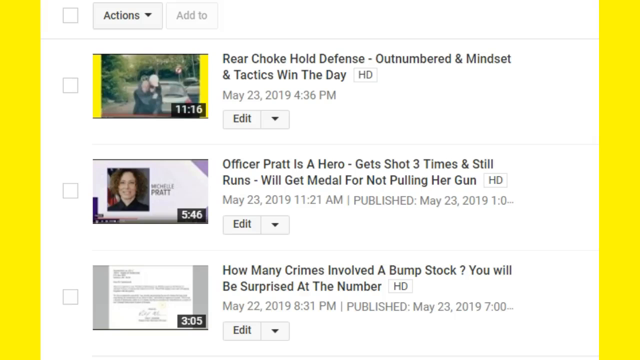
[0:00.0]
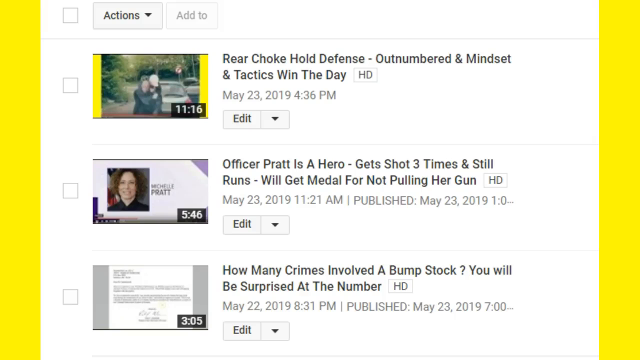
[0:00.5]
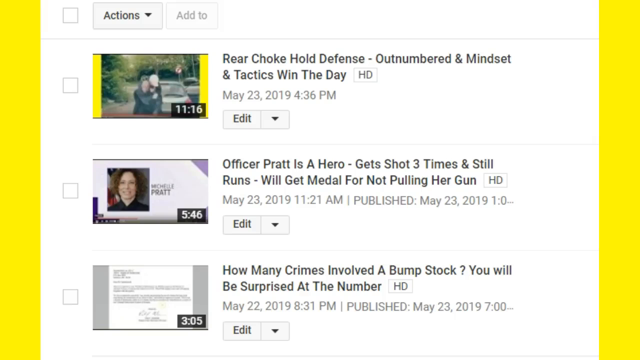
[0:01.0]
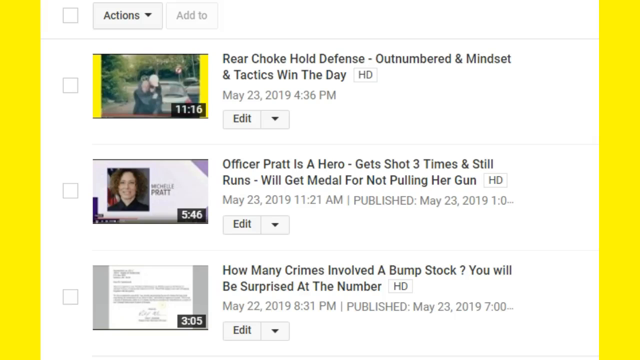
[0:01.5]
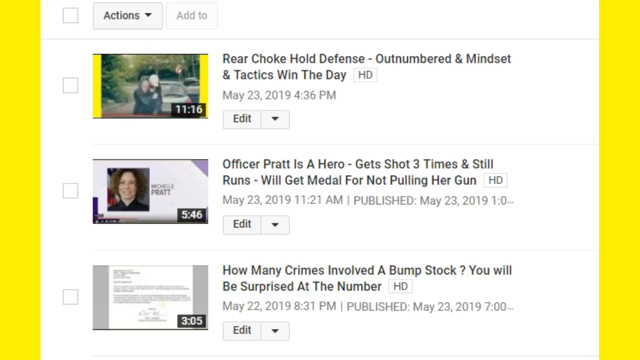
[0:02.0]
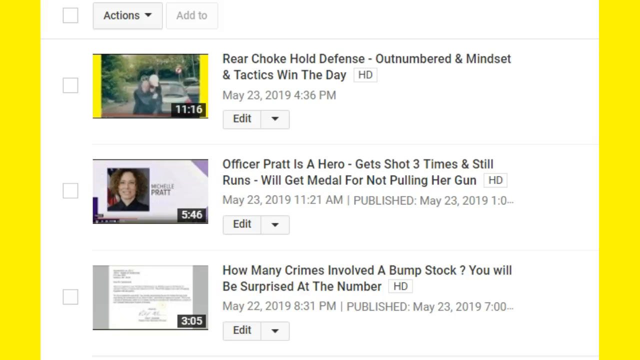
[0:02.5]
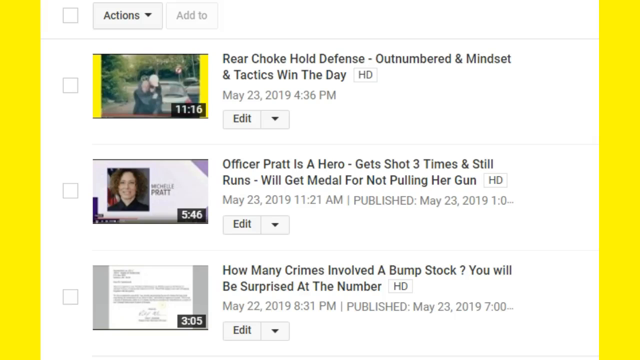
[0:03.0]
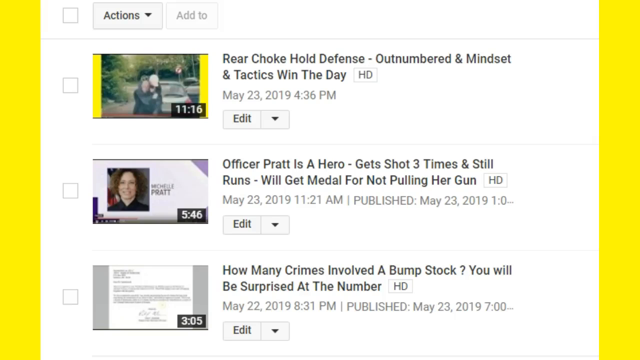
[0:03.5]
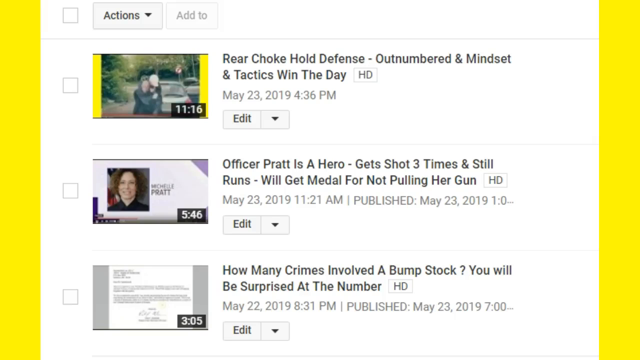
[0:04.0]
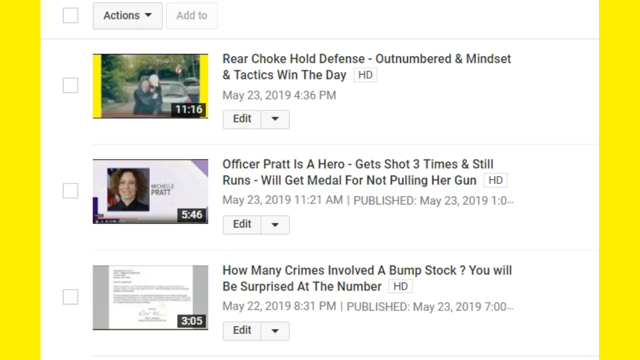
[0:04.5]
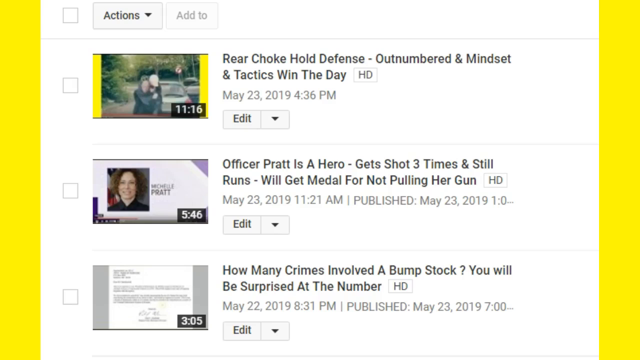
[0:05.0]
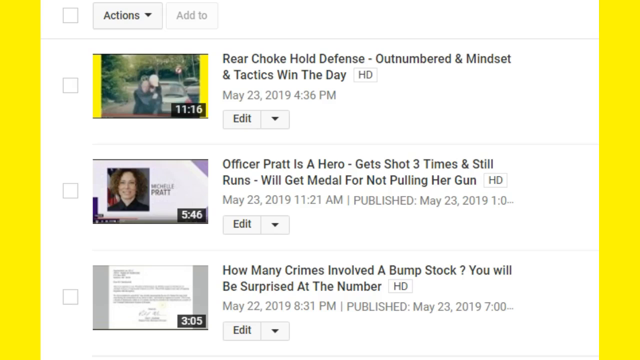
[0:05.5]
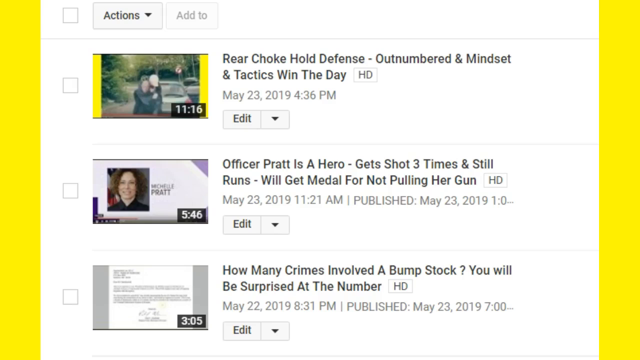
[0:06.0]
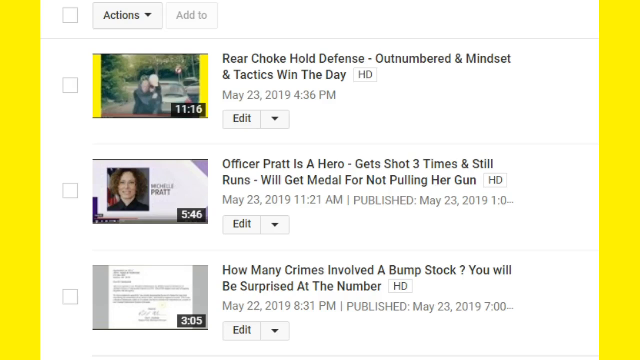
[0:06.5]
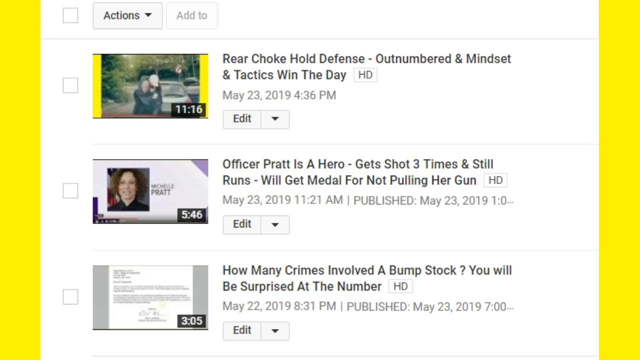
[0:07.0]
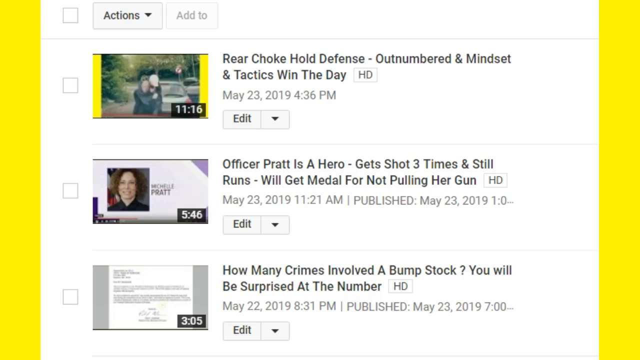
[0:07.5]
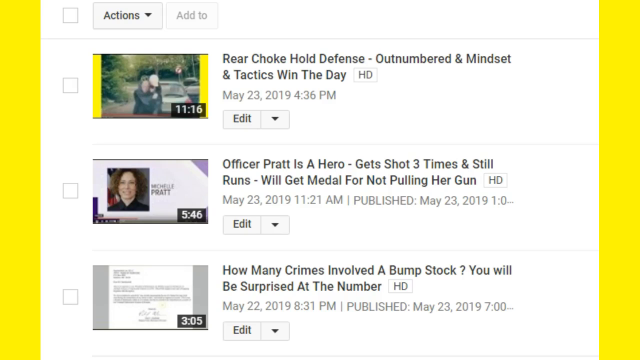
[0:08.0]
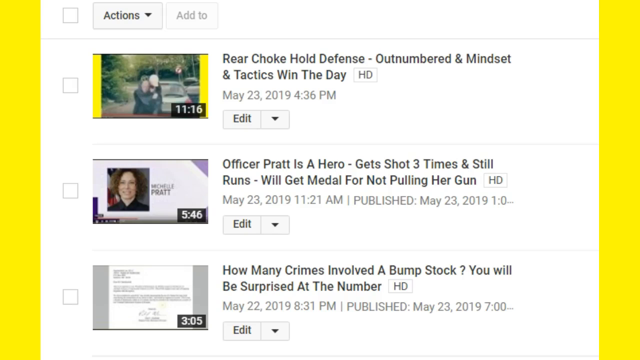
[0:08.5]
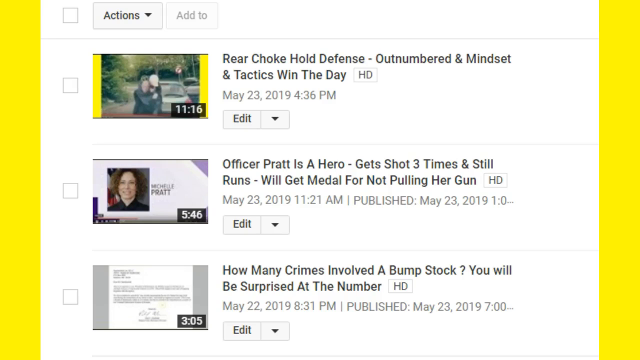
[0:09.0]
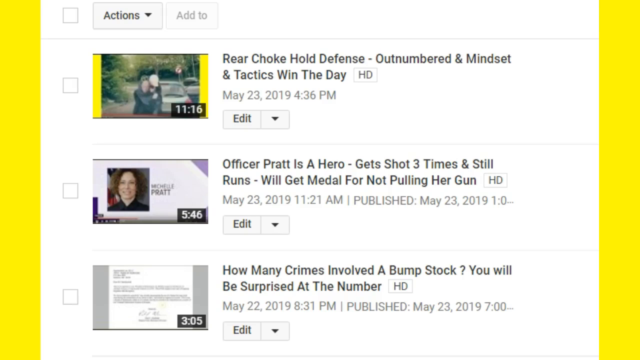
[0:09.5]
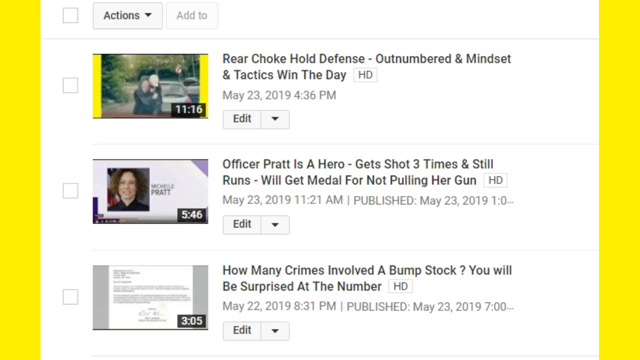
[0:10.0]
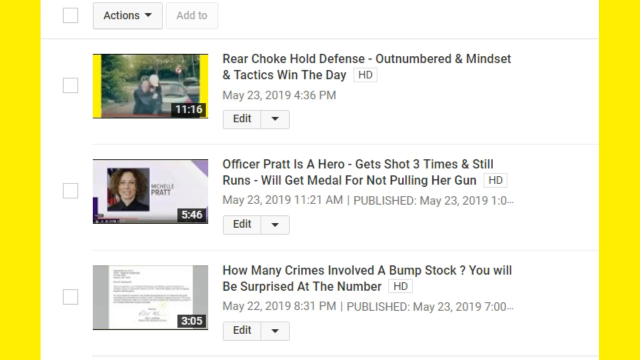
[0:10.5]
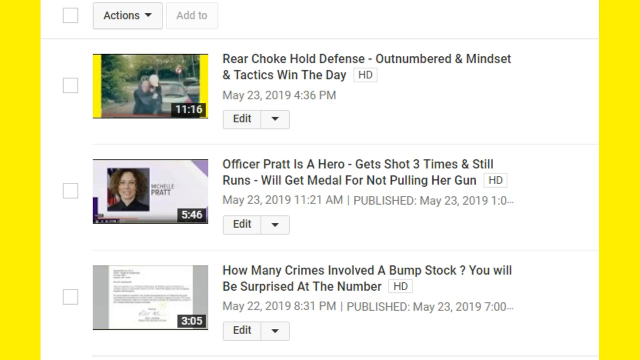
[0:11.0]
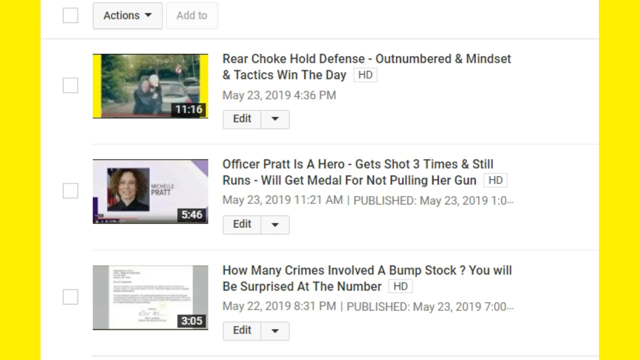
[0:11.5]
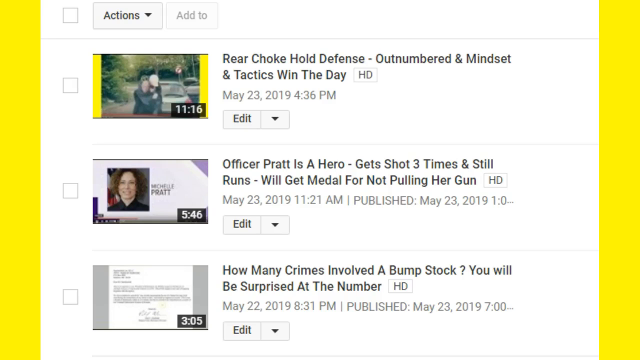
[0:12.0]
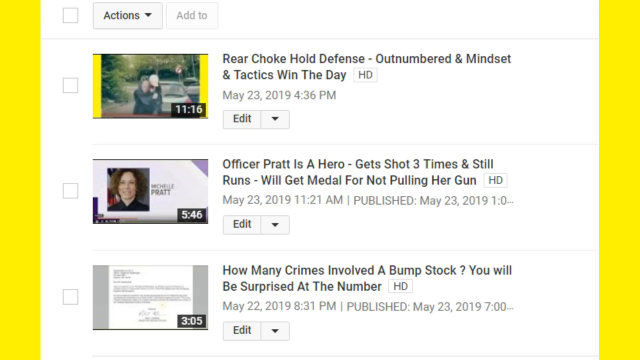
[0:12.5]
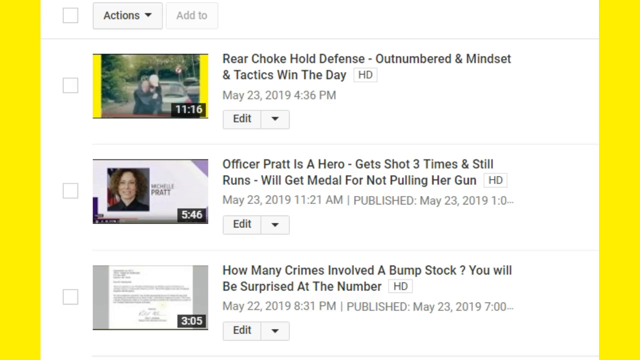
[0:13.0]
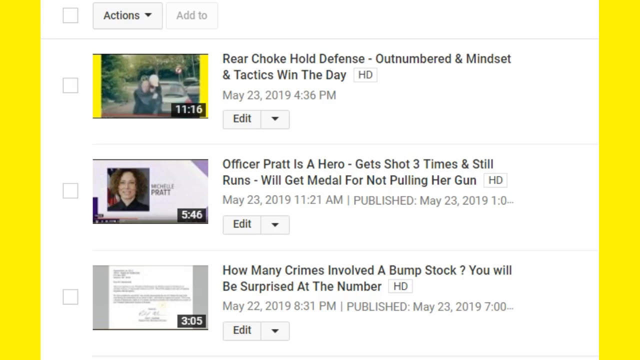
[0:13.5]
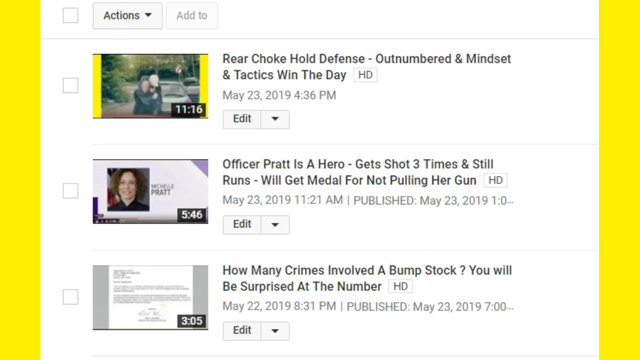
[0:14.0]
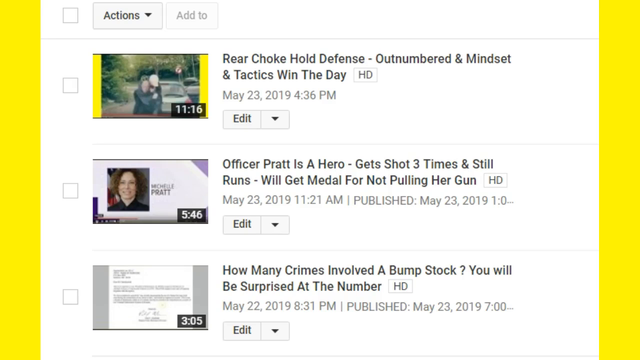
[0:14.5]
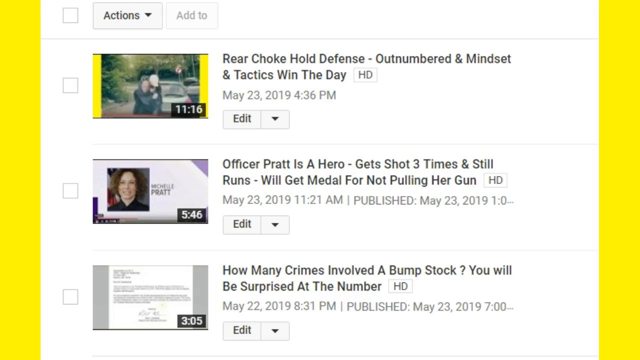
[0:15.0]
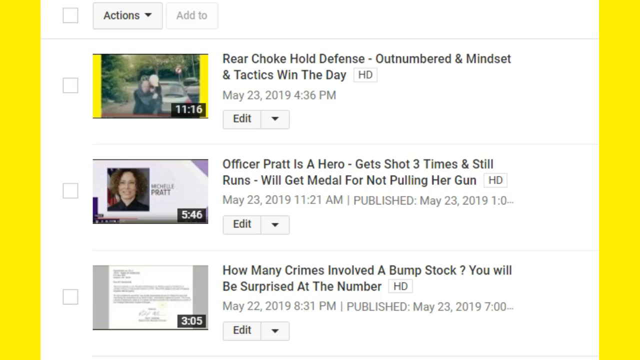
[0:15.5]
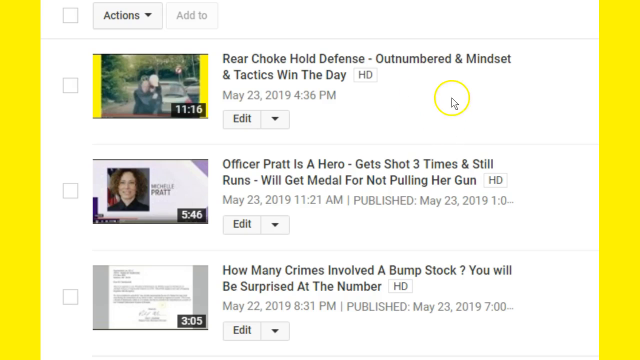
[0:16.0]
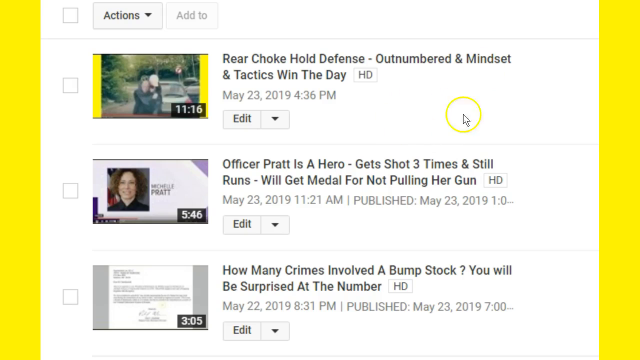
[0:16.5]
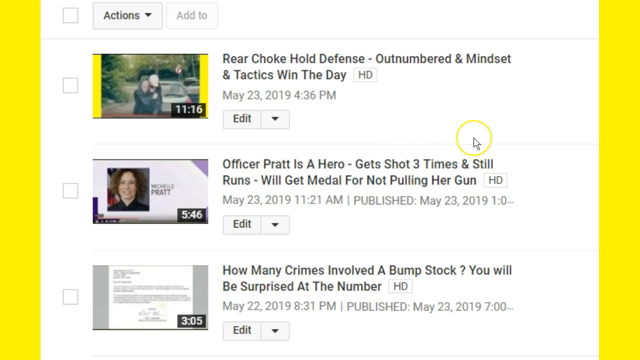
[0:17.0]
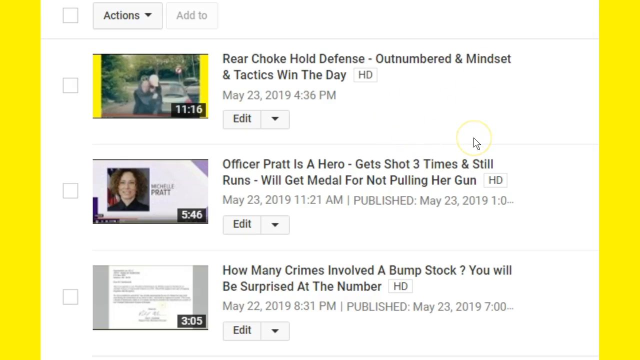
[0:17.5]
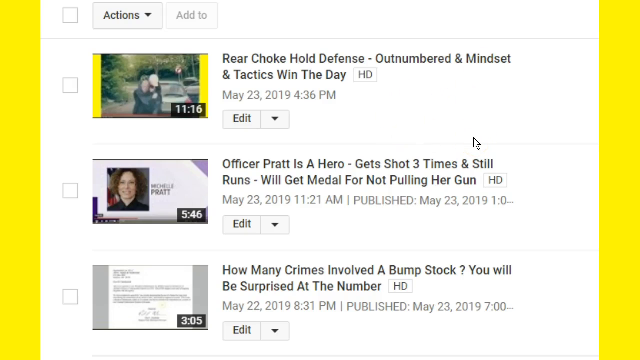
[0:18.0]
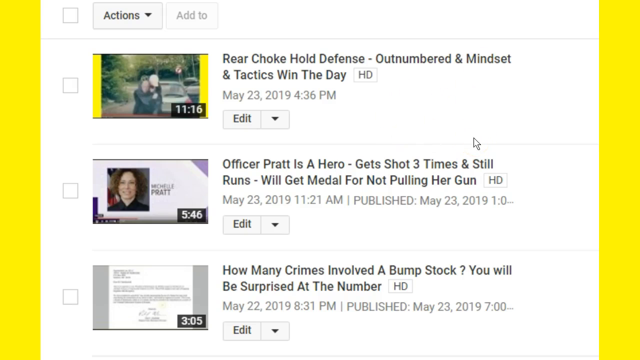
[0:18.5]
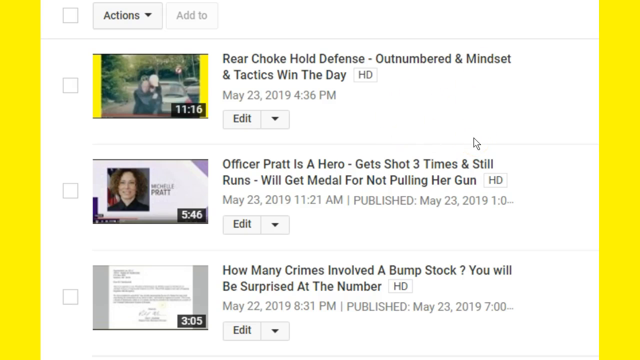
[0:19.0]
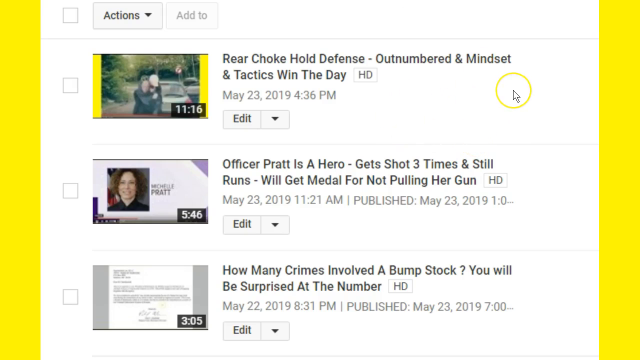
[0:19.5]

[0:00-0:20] A page shows a list of what appear to be video clips, with a mouse cursor moving around. It is unclear what they are; they look like they could be movies or short videos. The first video reads "a rear chokehold defense, outnumbered in mindset, and tactics win the day." The second reads "Officer Pratt is a hero, gets shot three times and still runs. Will get medal for not pulling a gun." The third reads "how many crime involved a bump stock?" The first is listed May 23, 2019, the second May 23, 2019, and the third May 22, 2019. They seem to be short videos.